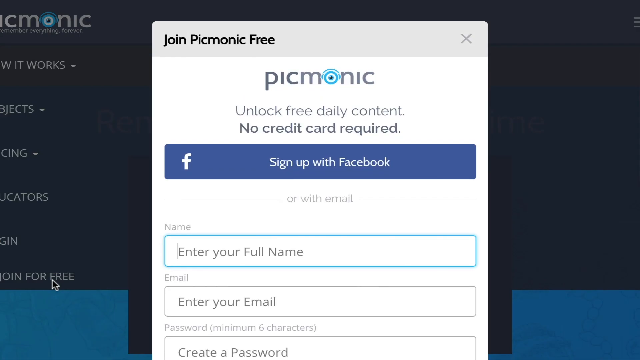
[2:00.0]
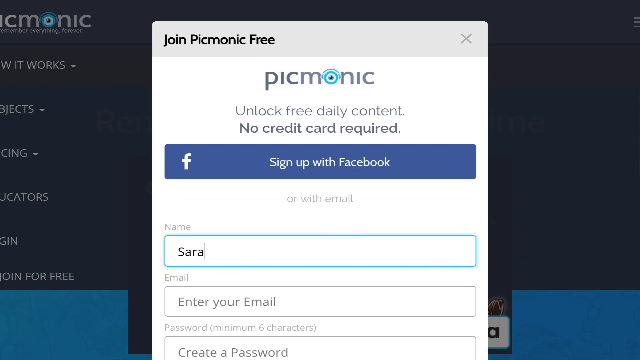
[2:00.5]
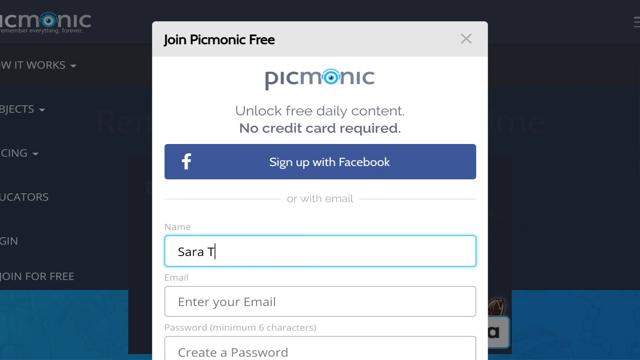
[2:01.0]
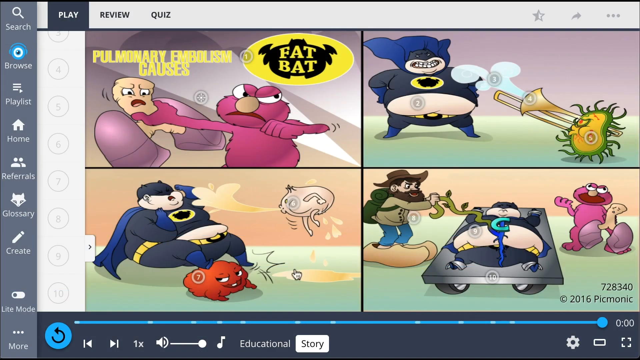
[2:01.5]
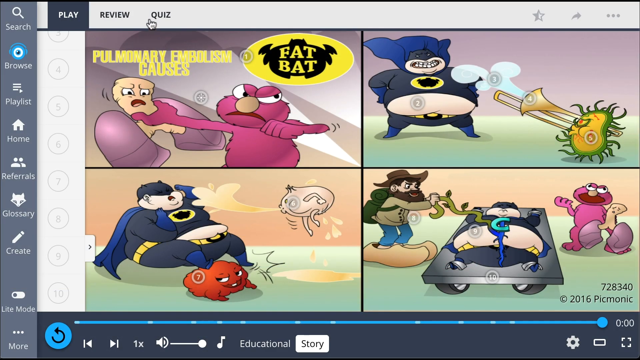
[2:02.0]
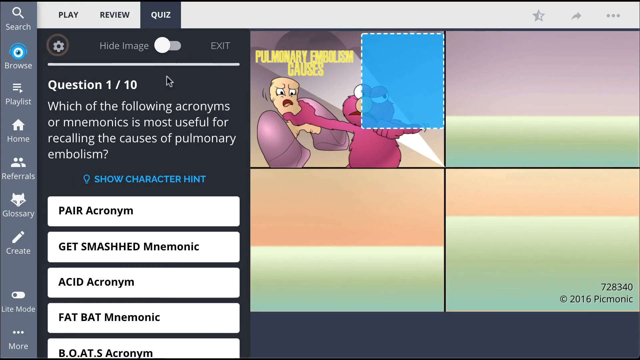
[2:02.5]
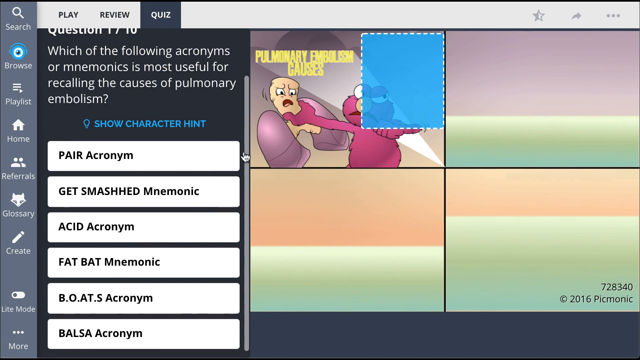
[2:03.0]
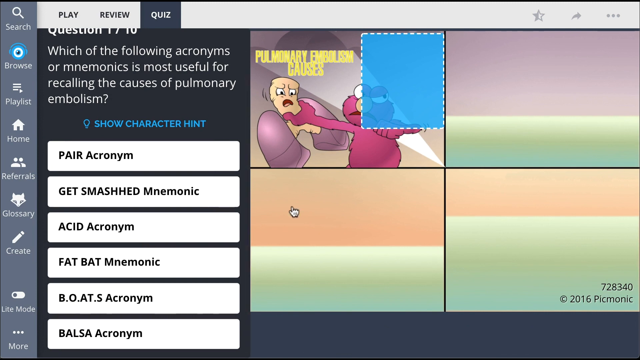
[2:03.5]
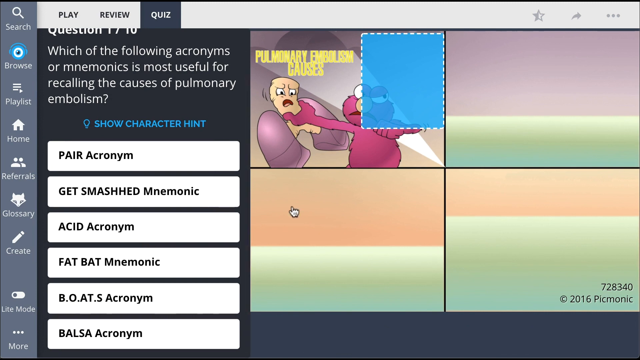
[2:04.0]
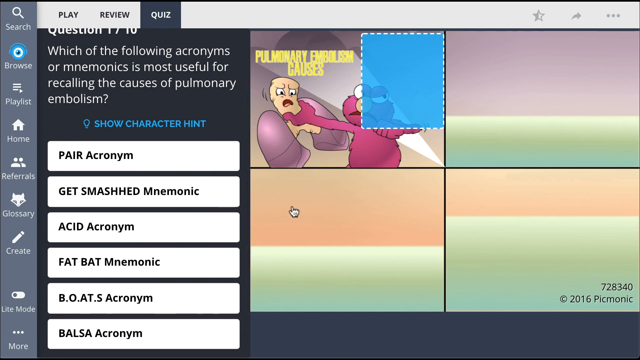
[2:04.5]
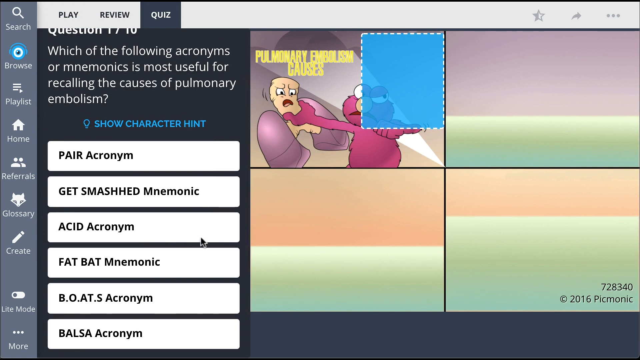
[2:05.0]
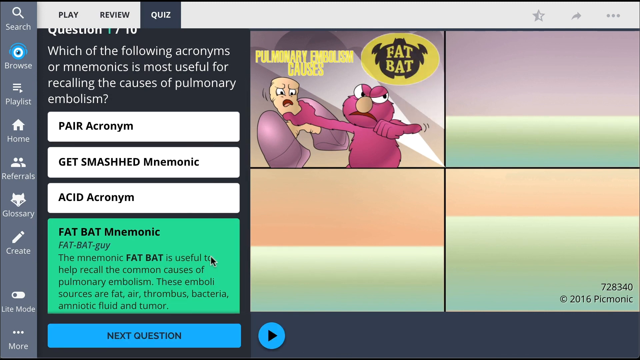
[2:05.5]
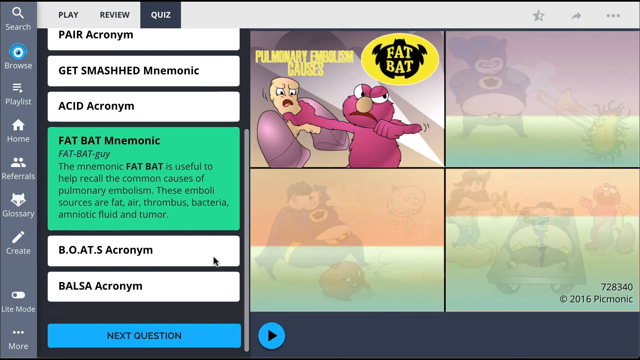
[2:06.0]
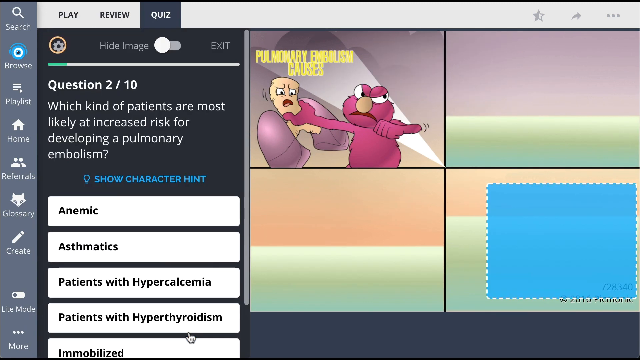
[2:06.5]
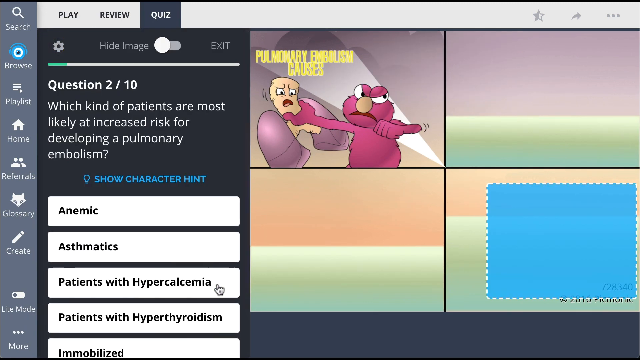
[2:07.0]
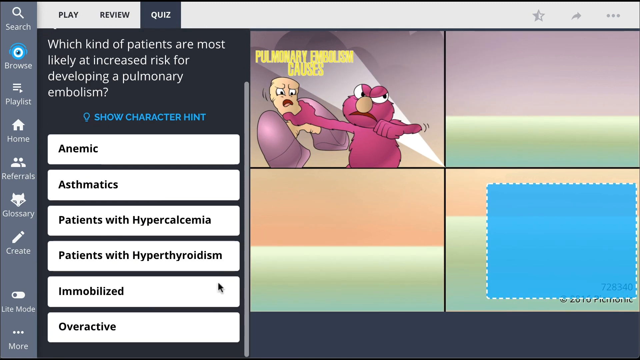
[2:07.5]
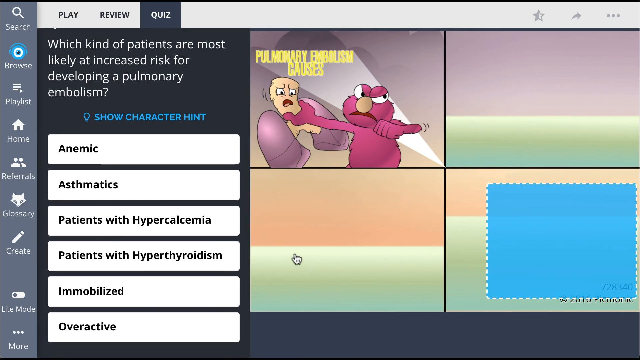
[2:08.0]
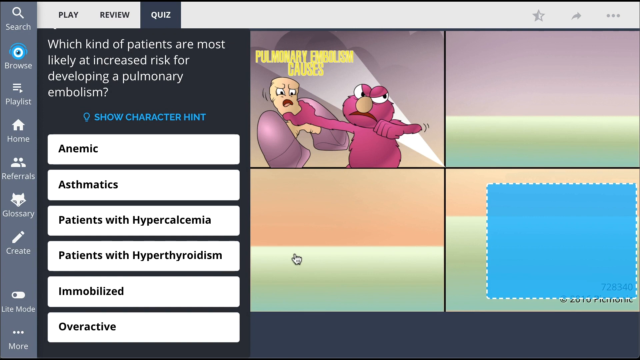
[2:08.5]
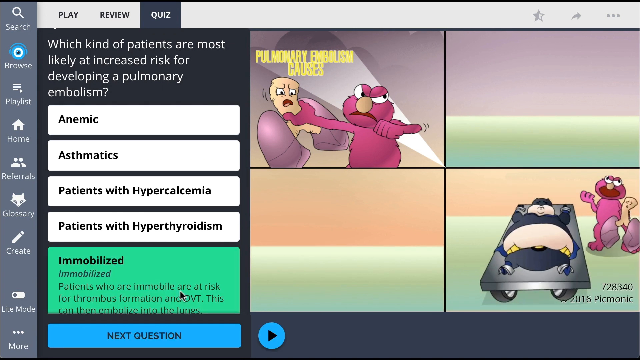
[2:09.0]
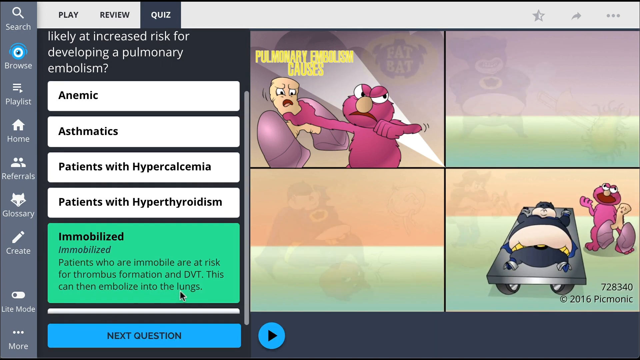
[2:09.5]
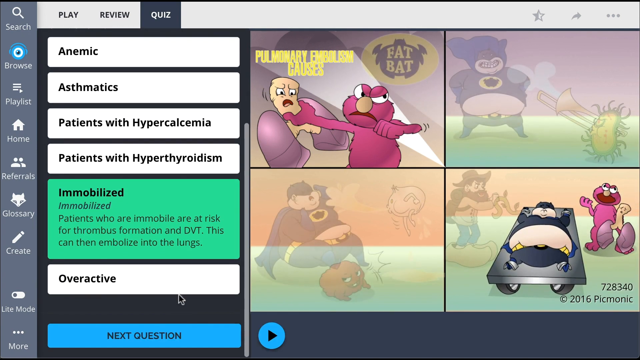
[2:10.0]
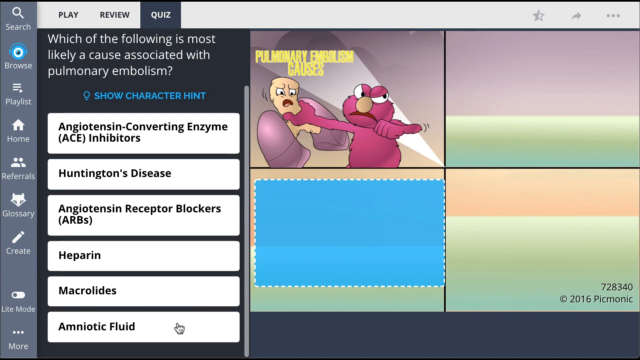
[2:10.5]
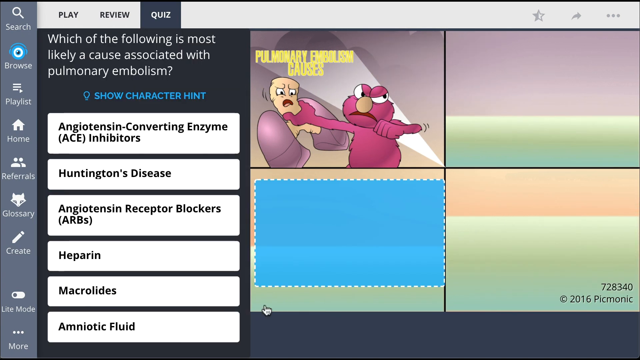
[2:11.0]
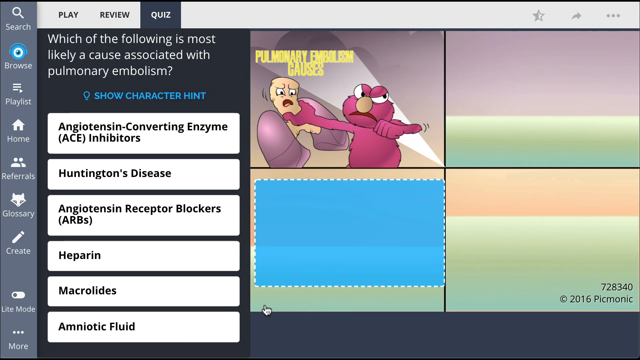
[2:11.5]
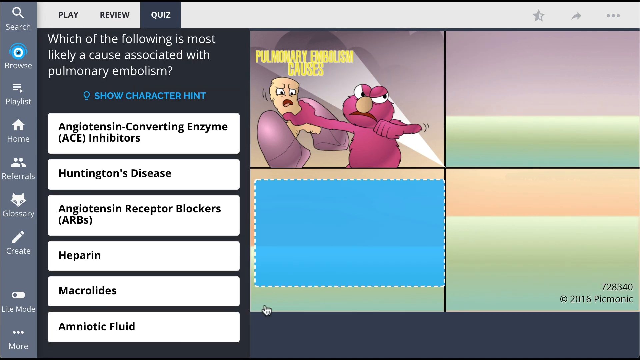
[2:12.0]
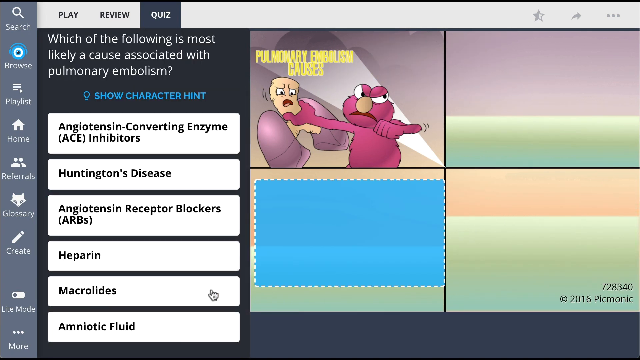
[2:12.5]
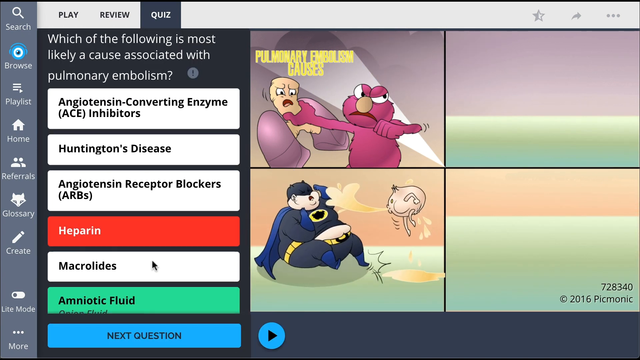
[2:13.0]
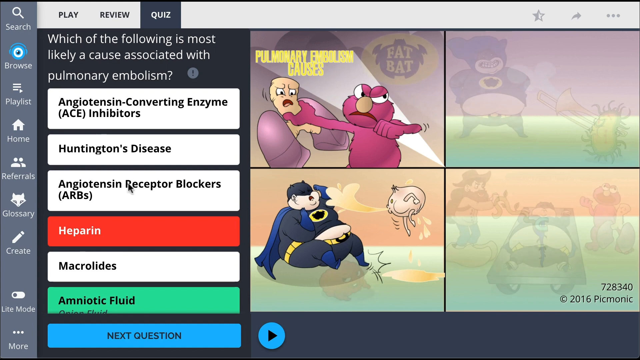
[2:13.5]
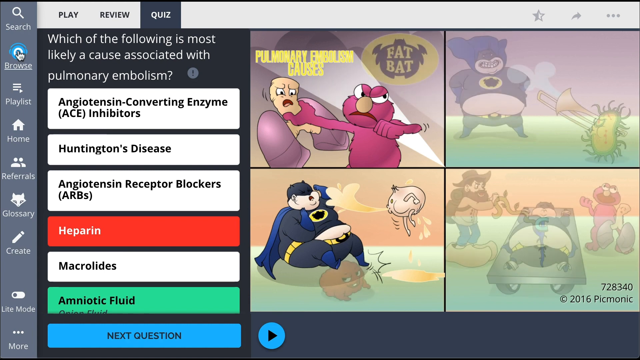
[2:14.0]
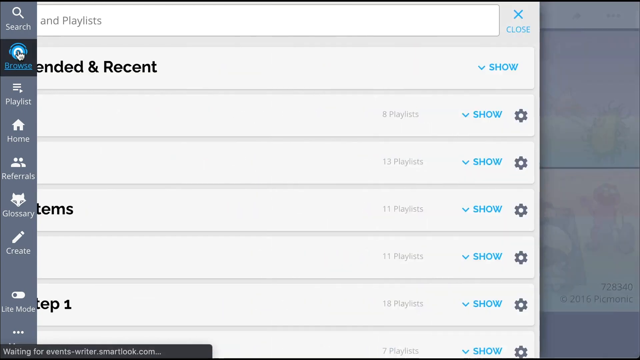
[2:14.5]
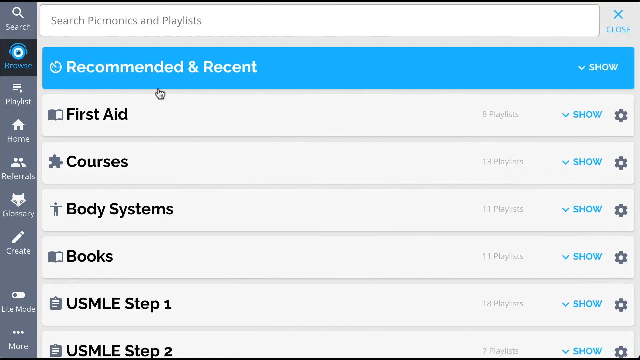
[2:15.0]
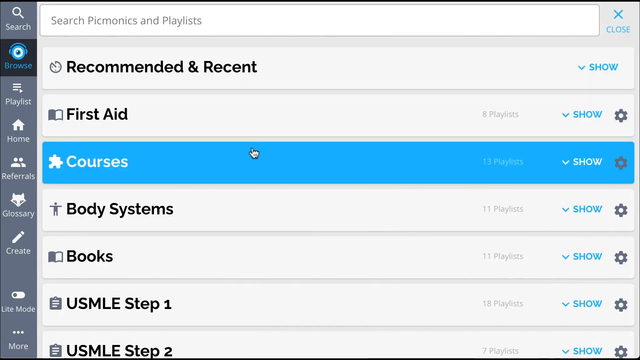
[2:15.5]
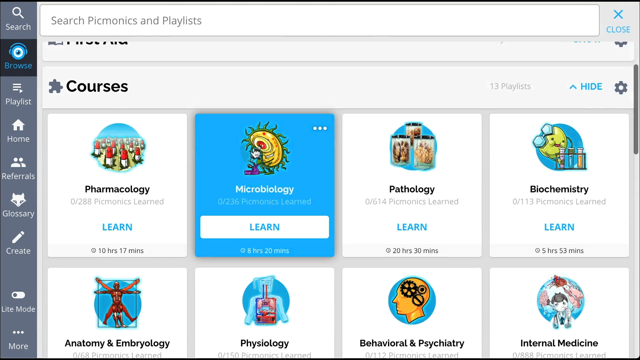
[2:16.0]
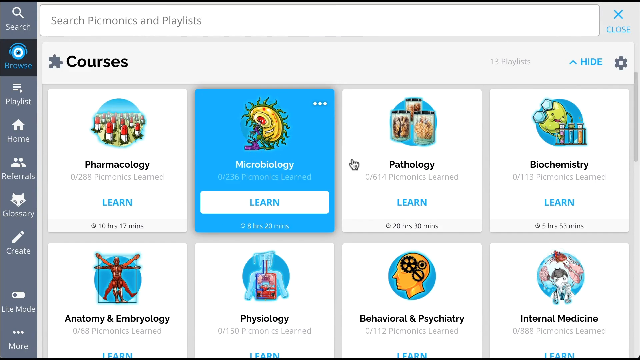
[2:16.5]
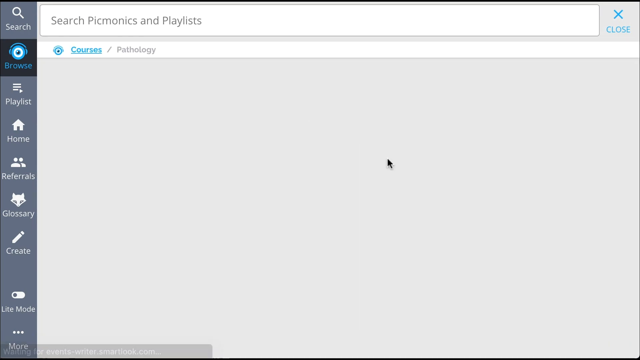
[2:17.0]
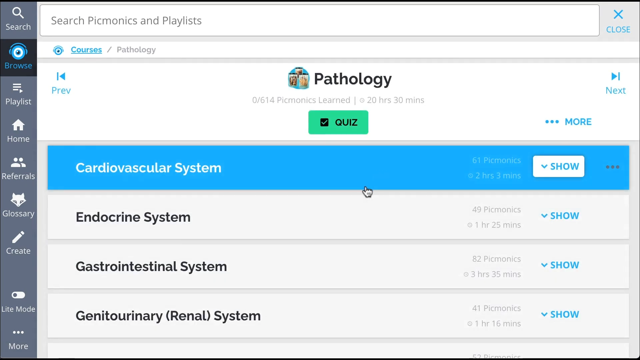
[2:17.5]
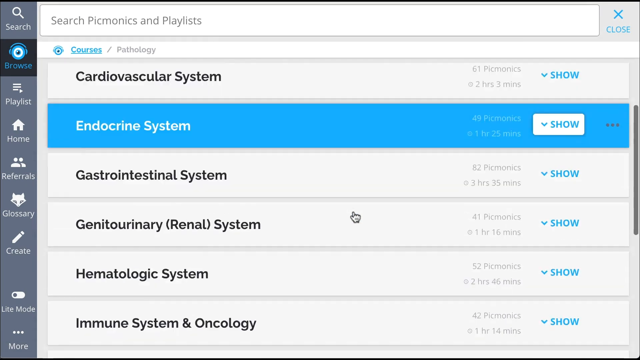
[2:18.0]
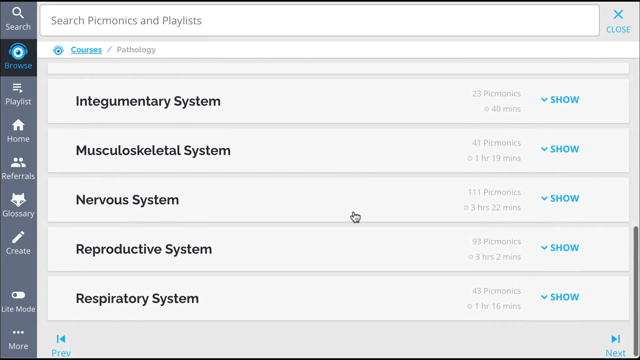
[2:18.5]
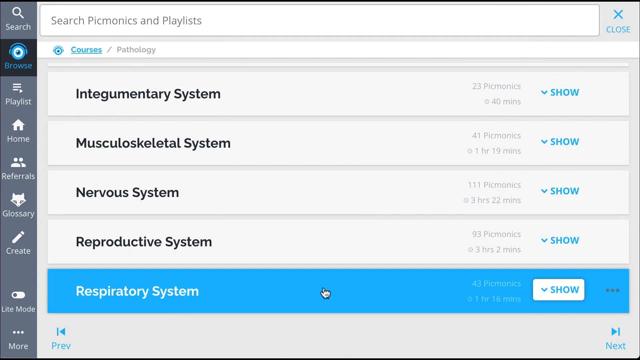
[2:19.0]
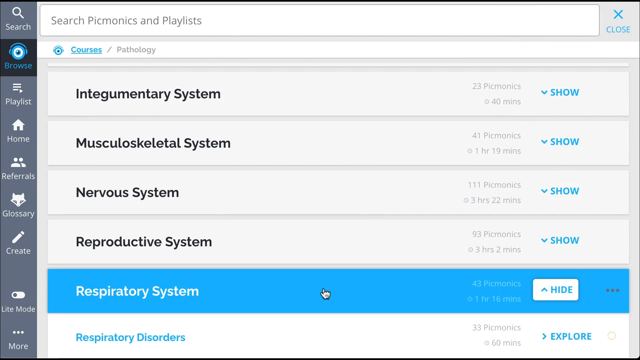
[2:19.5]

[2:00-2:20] A screen share shows the Picmonic page, with a black background and the Picmonic logo in the top left corner. Below are buttons for "how it works," "objects," "pricing," "educators," and "login." A pop-up offers "let's start healing Picmonic for free," asking for basic information or a sign-up with Facebook. The view returns to the comic seen earlier, and the user clicks among the upper buttons "play," "review," and "quiz," choosing quiz. A question pops up and the user starts answering; when the right answer is selected it turns green and the quiz moves on to the next question. Once an answer is selected, a box appears on the comic panels to the right explaining what happens where in the comic in line with the answer. The user continues through the quiz, and when something is answered incorrectly, a red box appears around the incorrect answer.